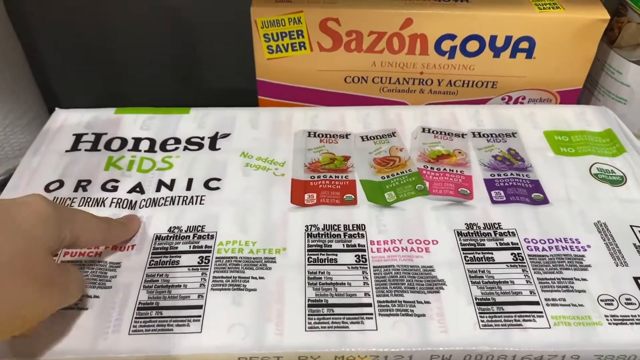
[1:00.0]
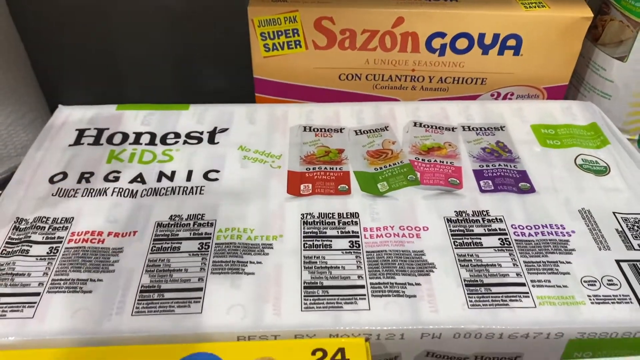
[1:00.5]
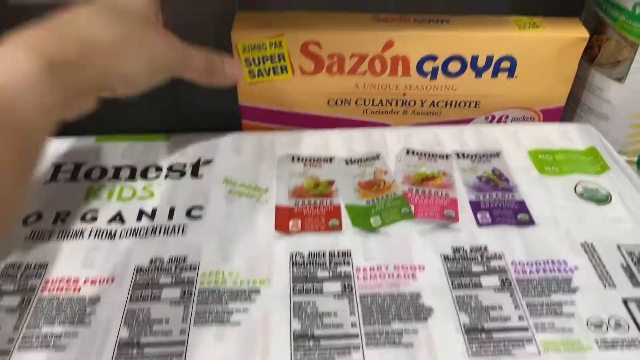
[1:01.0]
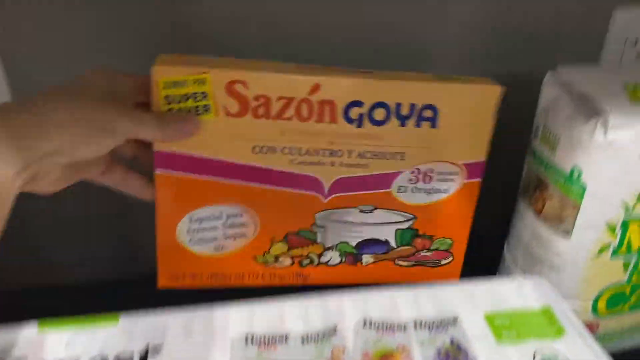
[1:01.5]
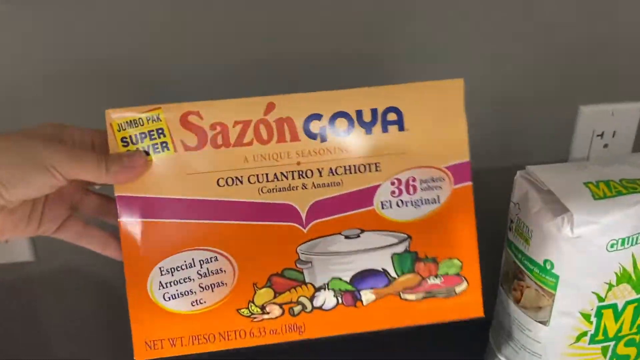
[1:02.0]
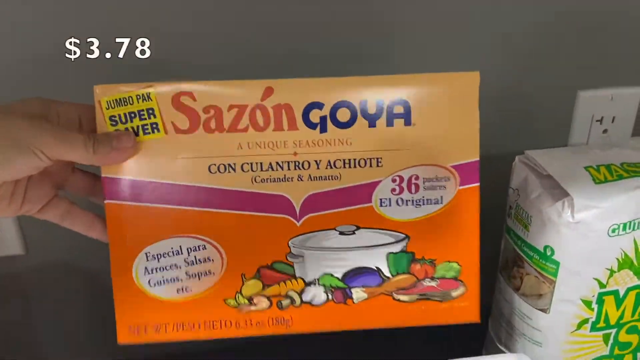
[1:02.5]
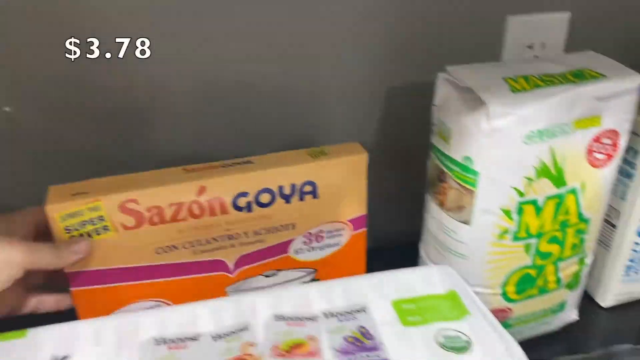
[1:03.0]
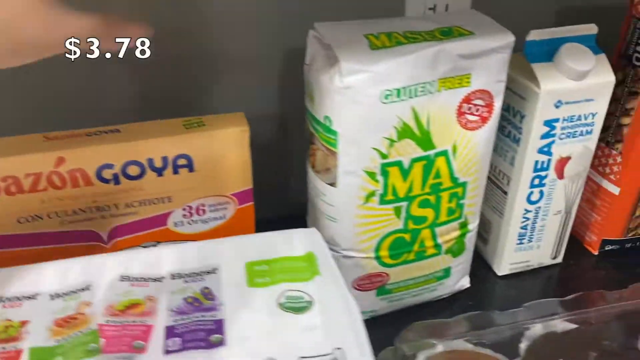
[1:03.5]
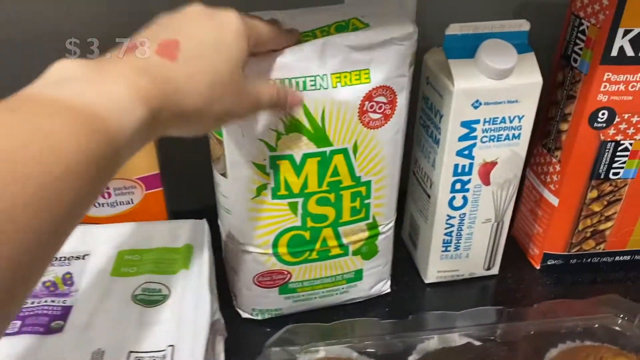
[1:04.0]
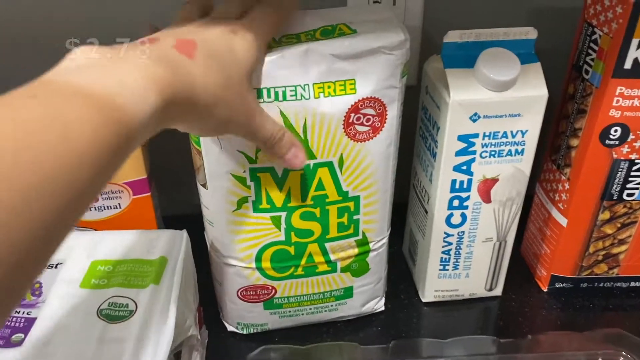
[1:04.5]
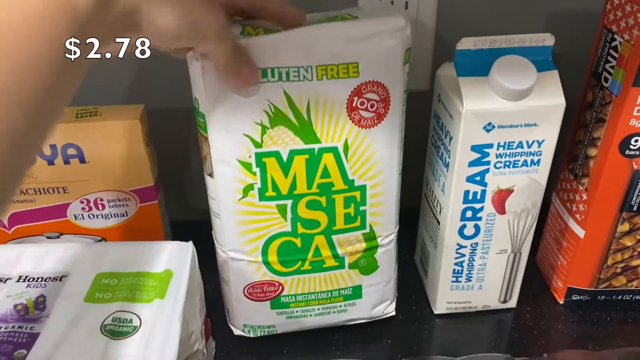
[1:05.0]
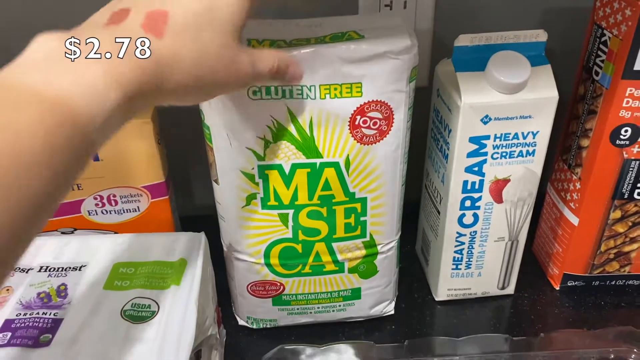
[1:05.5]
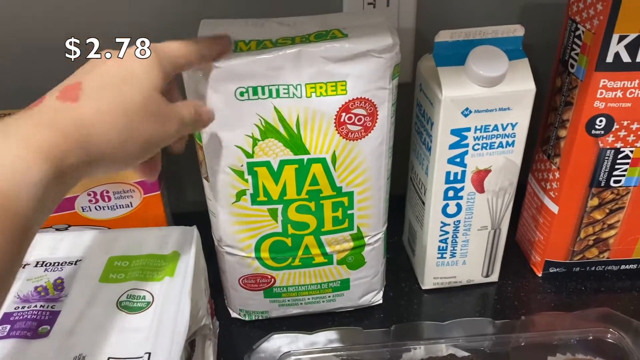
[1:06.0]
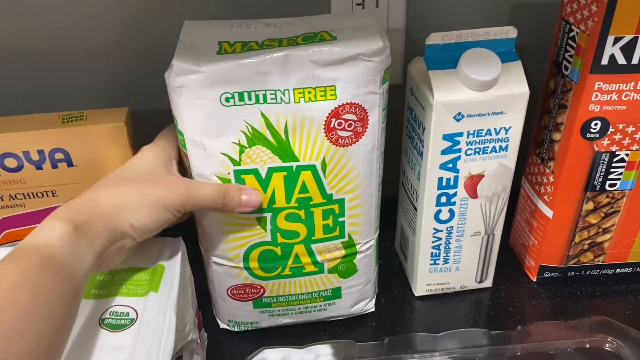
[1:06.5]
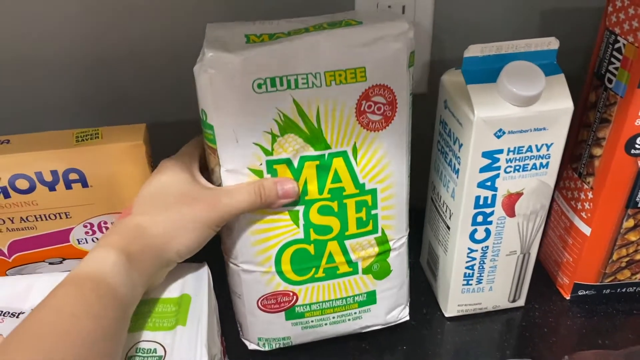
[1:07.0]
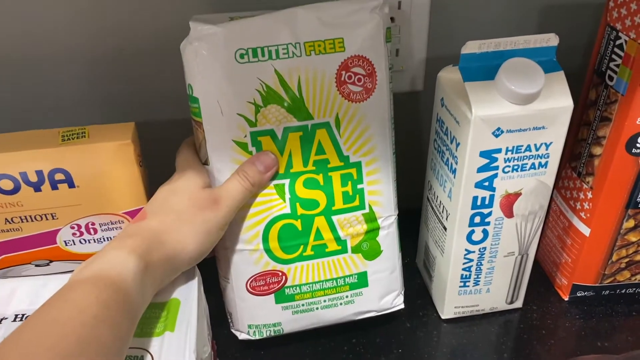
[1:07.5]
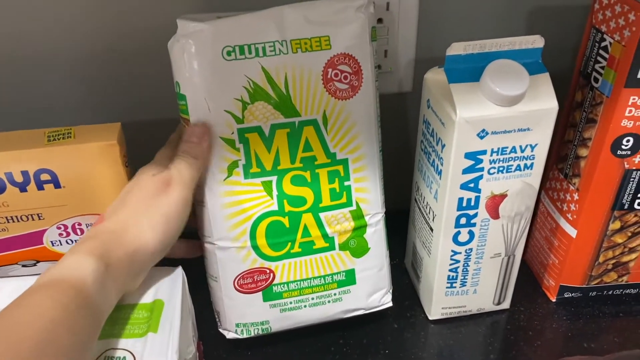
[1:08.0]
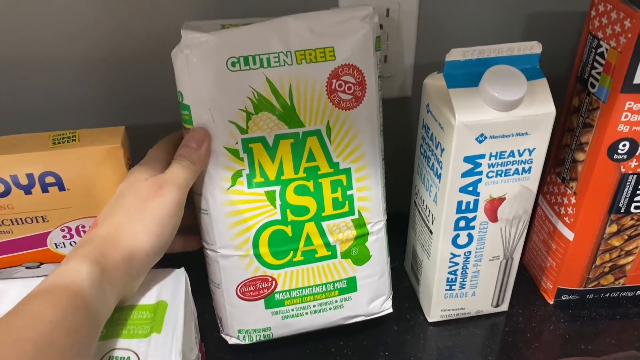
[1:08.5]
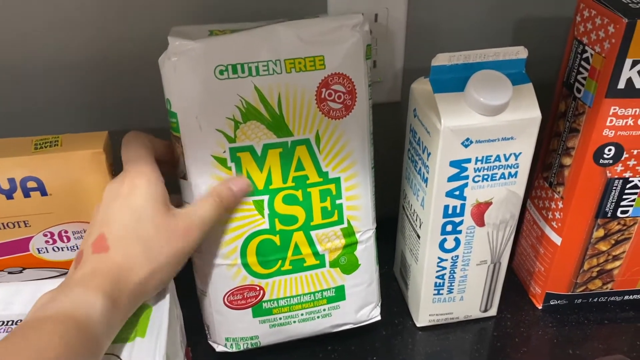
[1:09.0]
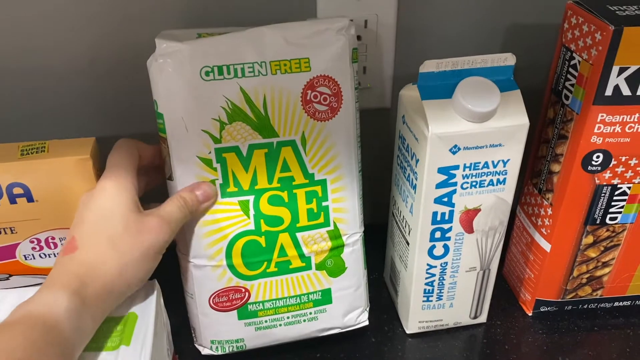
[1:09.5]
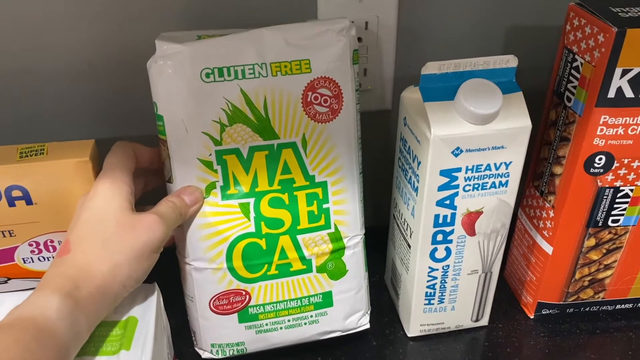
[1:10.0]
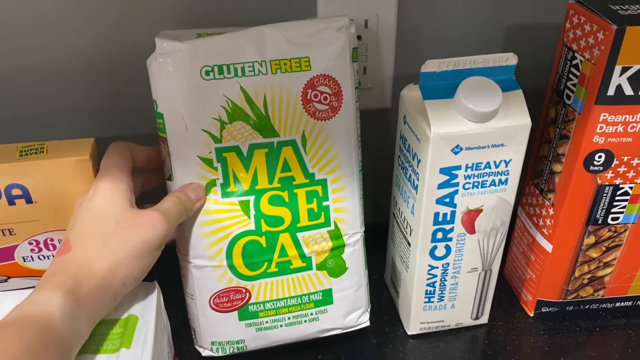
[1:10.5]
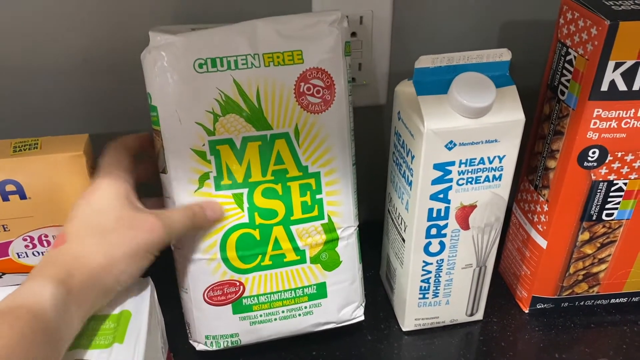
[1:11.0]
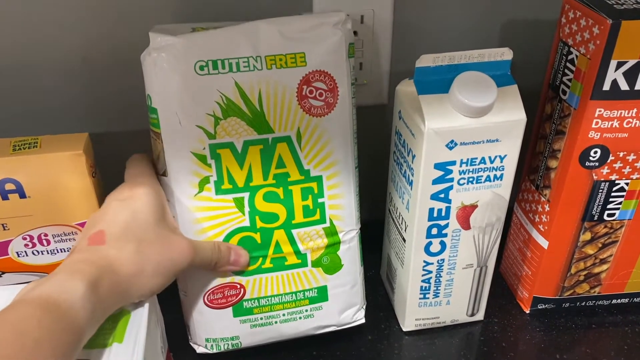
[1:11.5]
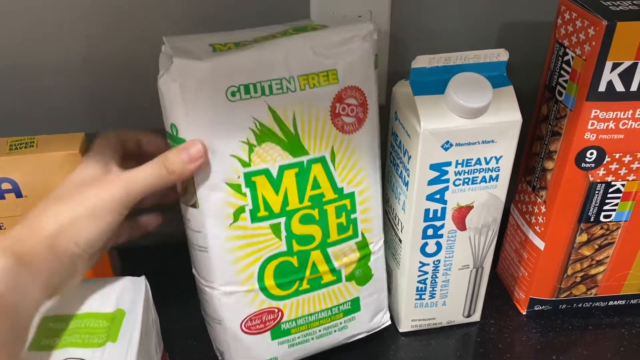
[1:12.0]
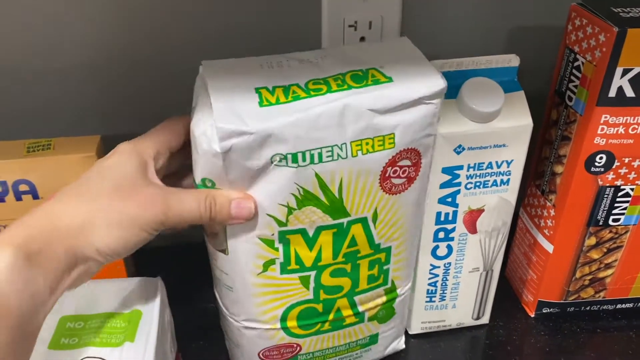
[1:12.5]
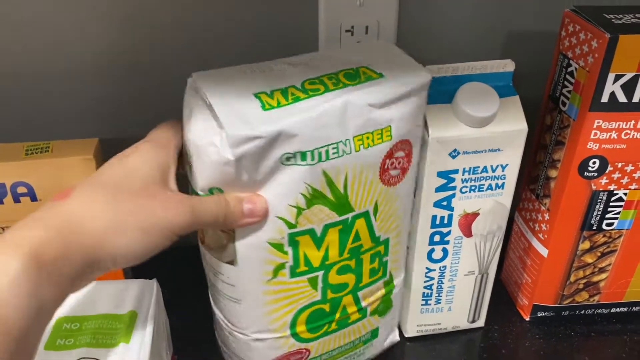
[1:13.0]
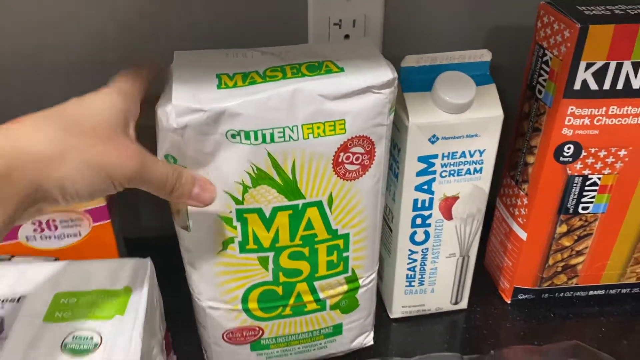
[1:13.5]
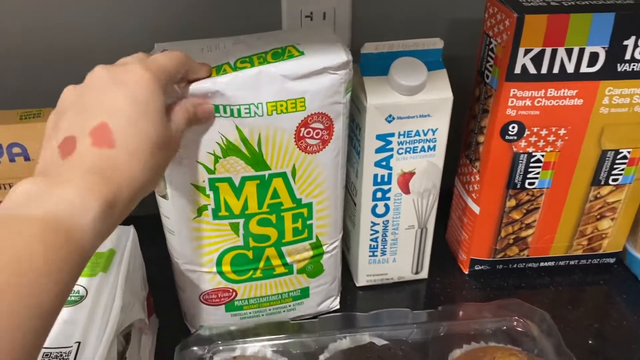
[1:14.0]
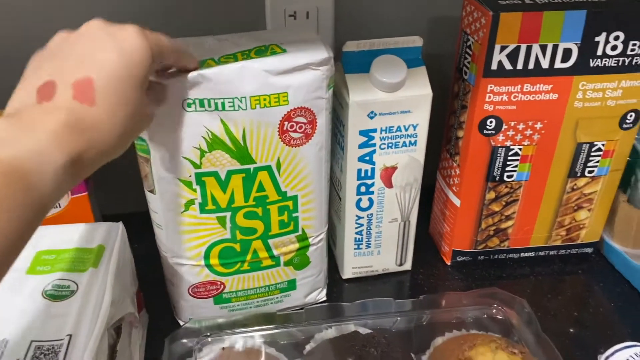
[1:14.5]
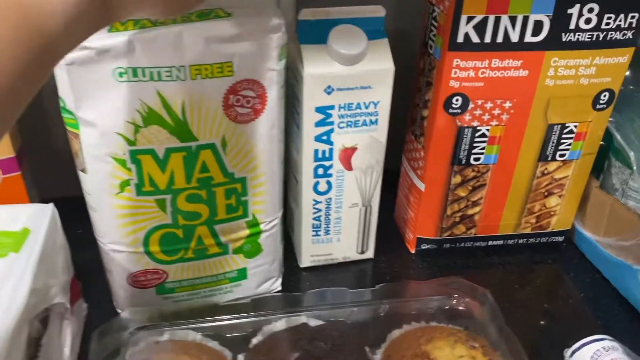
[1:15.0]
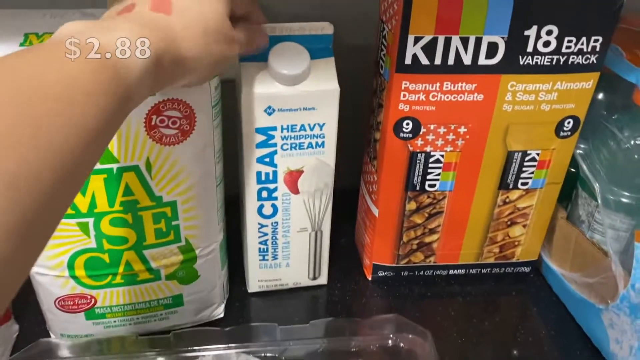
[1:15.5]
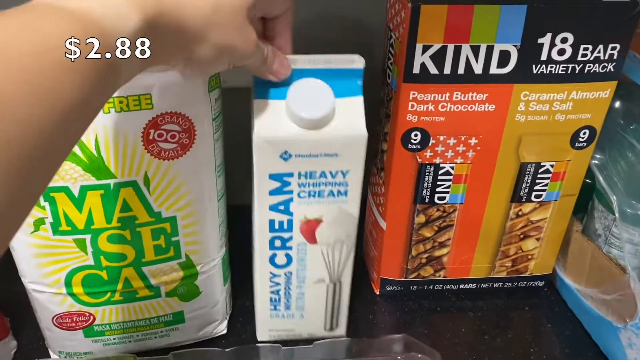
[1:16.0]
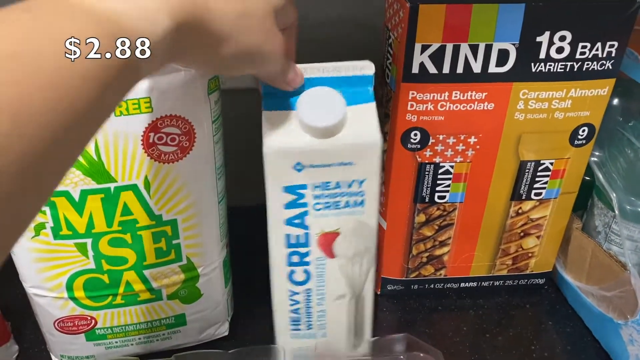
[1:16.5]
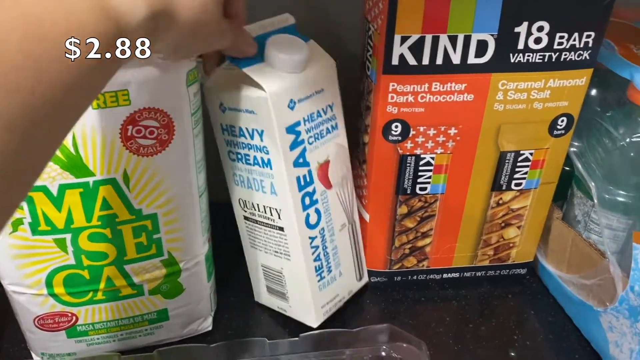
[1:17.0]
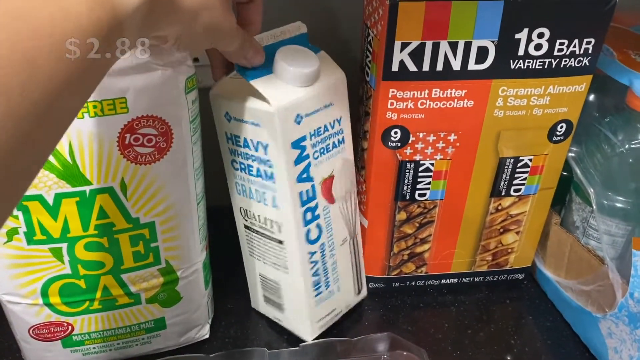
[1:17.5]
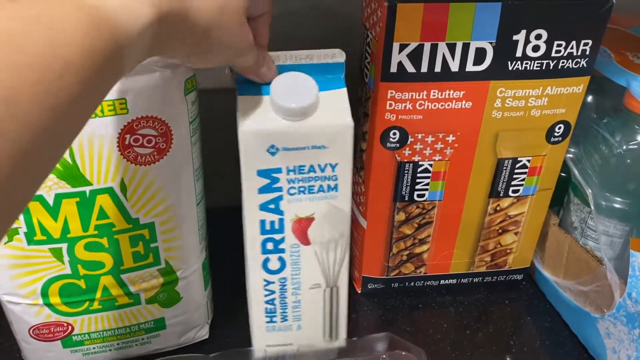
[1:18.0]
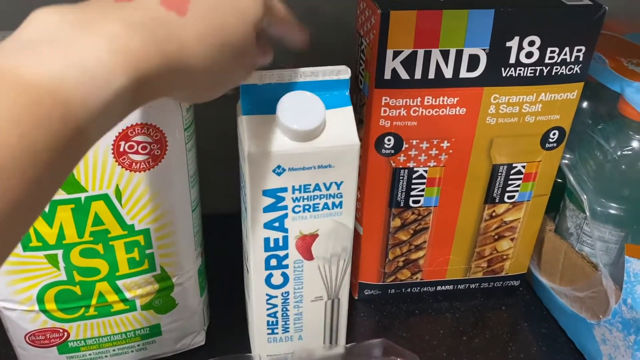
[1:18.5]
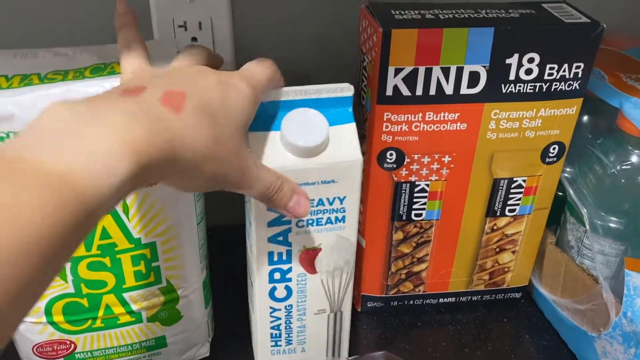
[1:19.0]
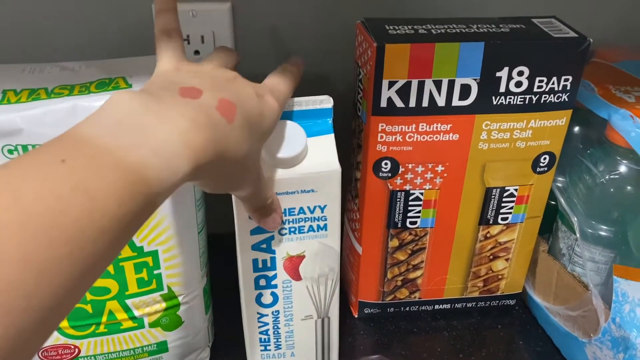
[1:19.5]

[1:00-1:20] The person's left hand is on top of a white plastic package, pointing to the label in the upper left corner, which says "Honest Kids Organic Juice Drink from Concentrate." The hand rests on top of the package and is then quickly removed. The camera pans to a package of seasoning, which the person lifts with the left hand and pulls toward the camera, and a price of $3.78 appears. They place the item back behind the juice, where they retrieved it from. The camera pans right to another package that appears to be some sort of cornmeal. The person places the left hand on the side of the package, then on top of it, and tilts the package back slightly. A price of $2.78 appears in the upper left corner of the screen, and the person taps the top of the package with the index finger once again.